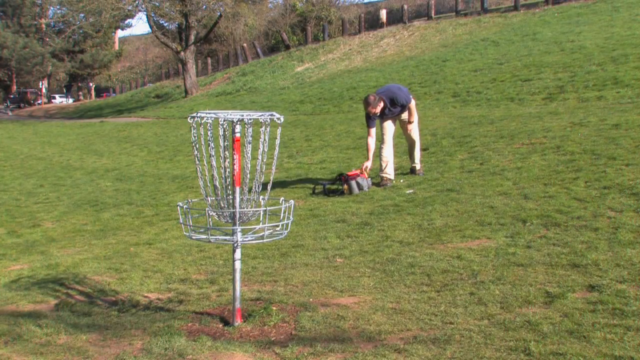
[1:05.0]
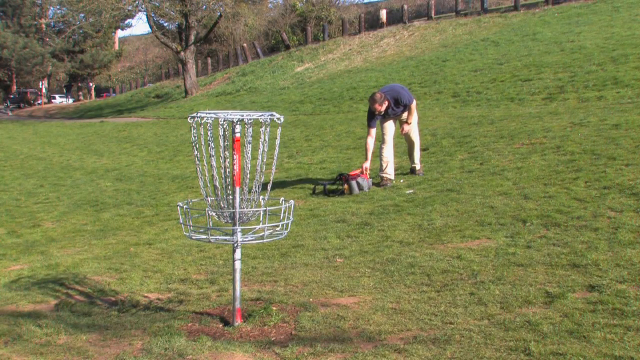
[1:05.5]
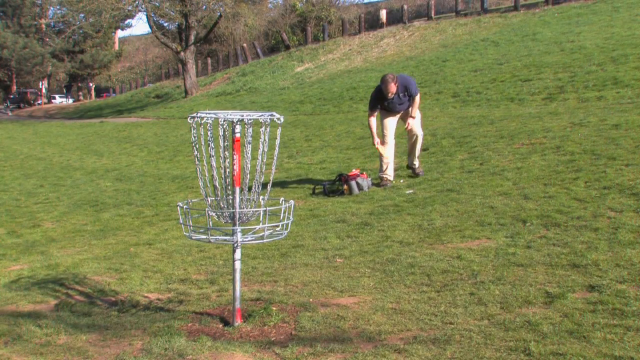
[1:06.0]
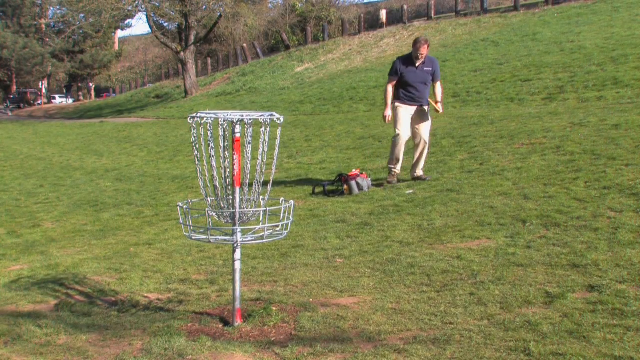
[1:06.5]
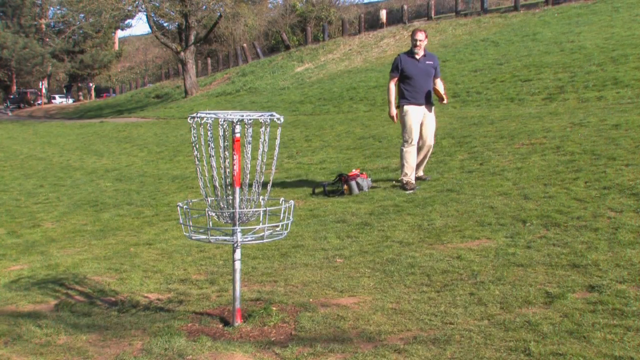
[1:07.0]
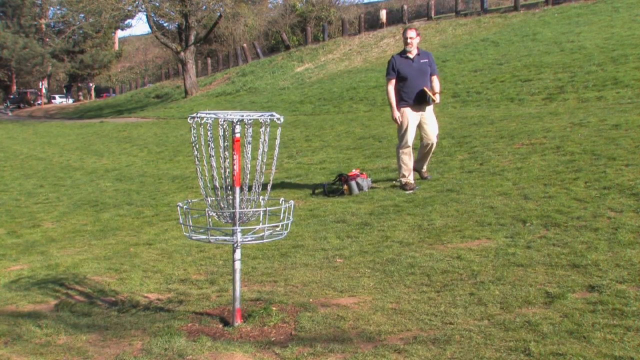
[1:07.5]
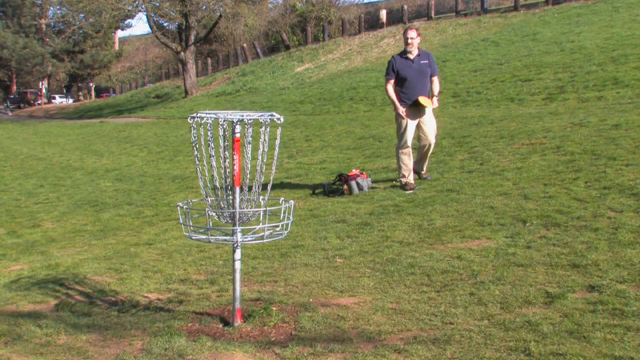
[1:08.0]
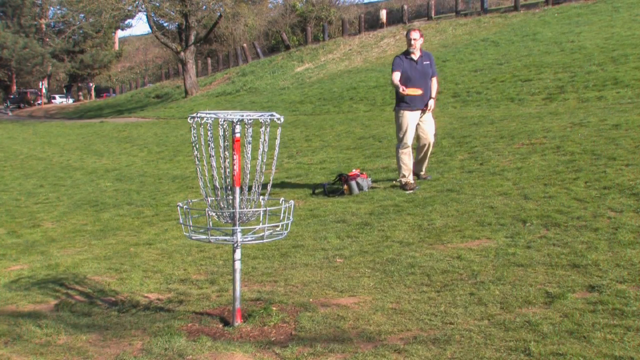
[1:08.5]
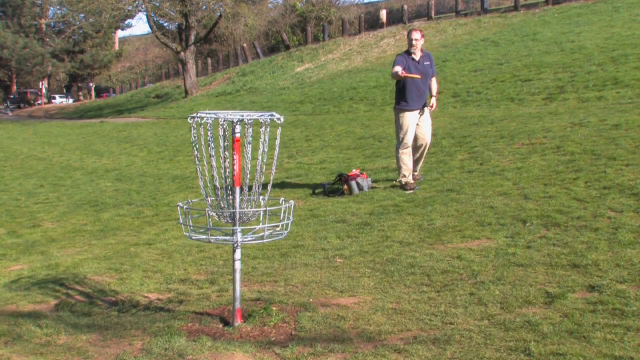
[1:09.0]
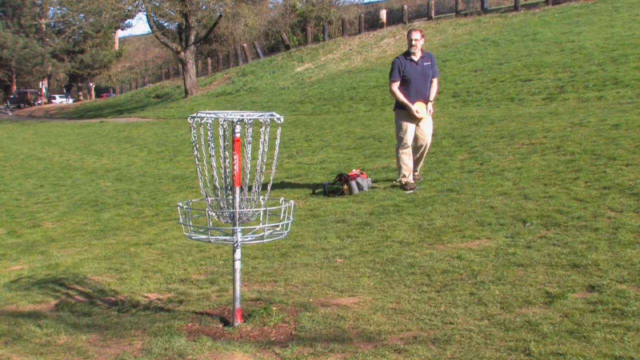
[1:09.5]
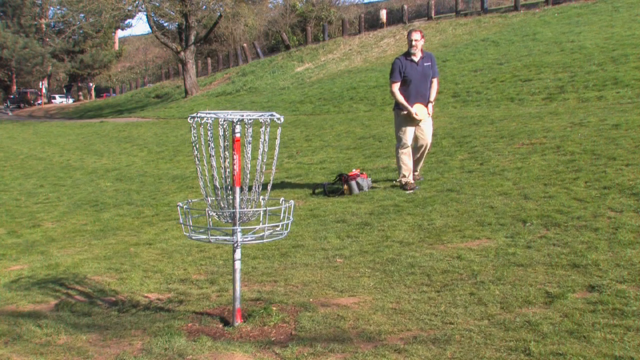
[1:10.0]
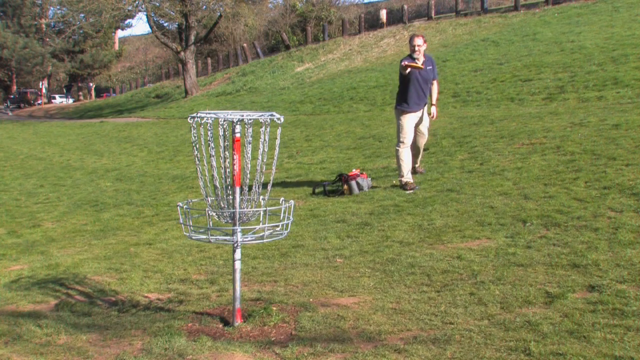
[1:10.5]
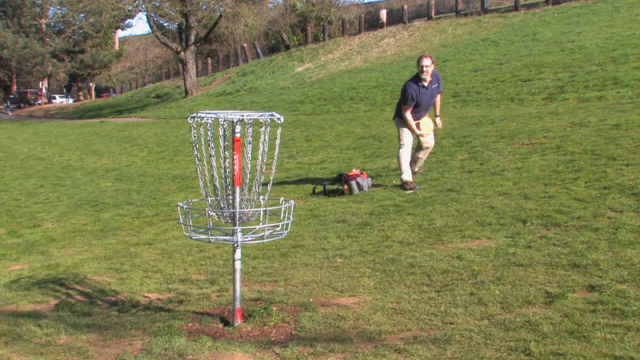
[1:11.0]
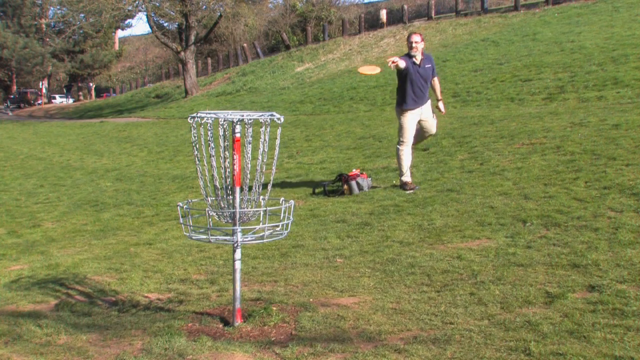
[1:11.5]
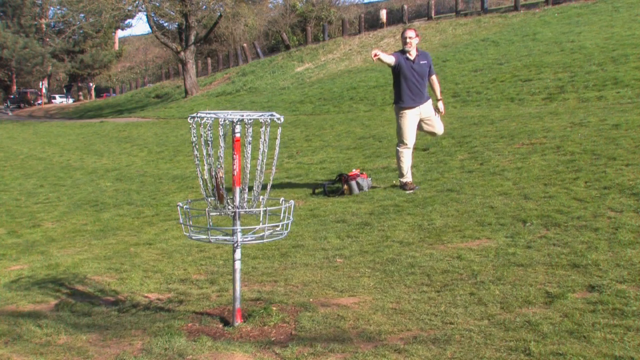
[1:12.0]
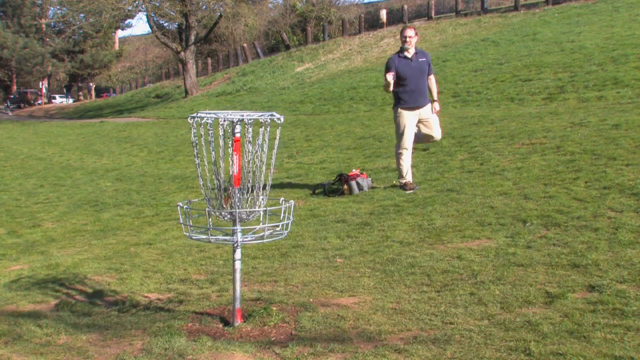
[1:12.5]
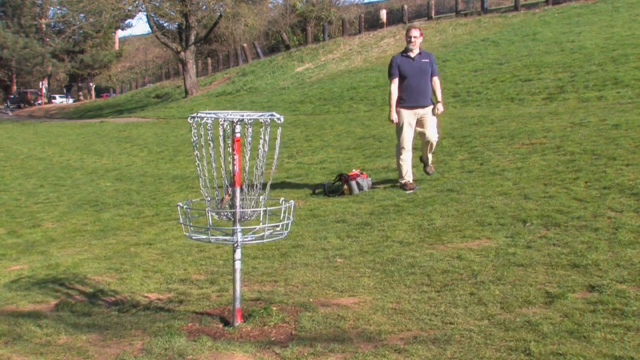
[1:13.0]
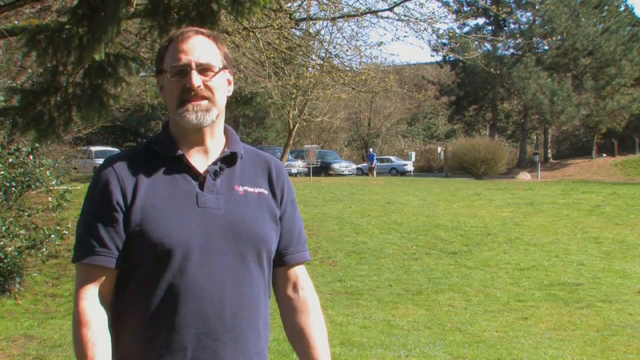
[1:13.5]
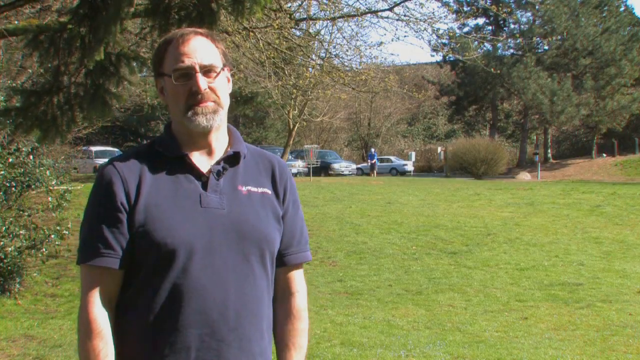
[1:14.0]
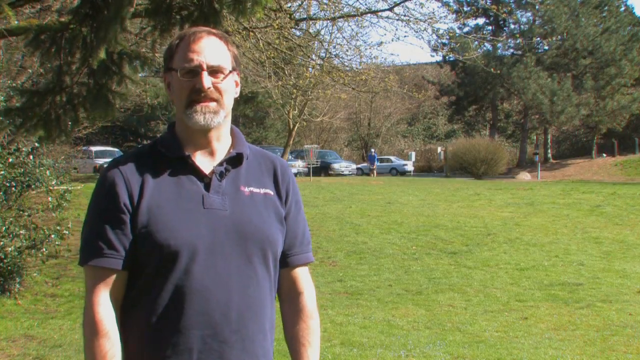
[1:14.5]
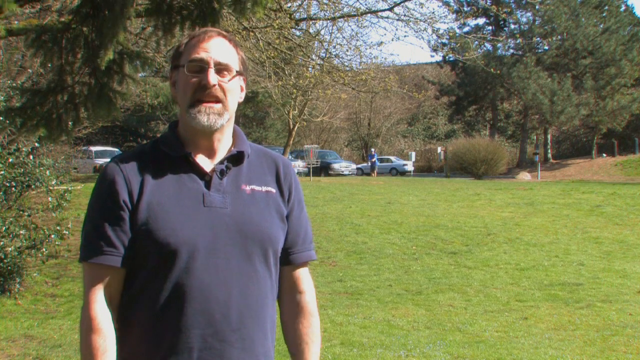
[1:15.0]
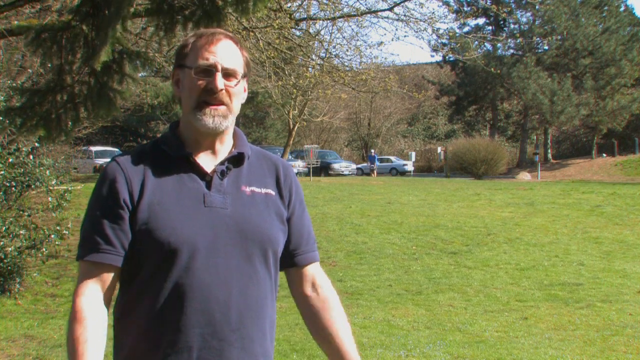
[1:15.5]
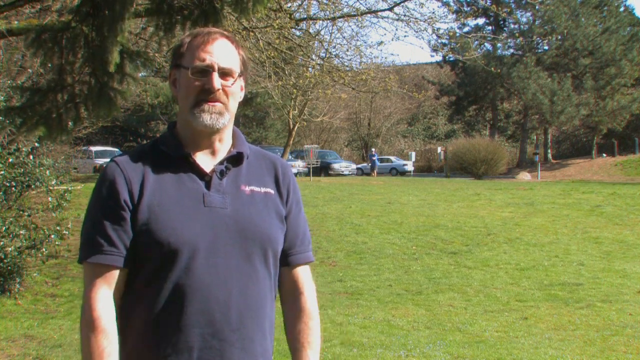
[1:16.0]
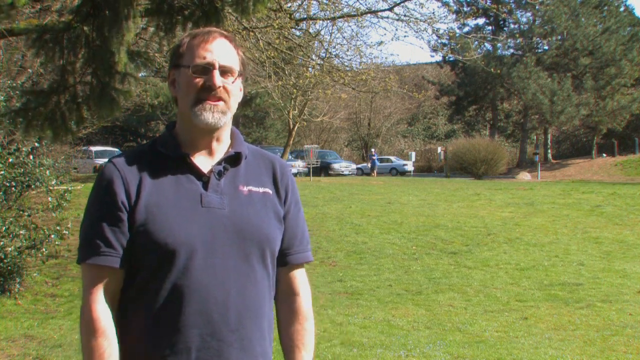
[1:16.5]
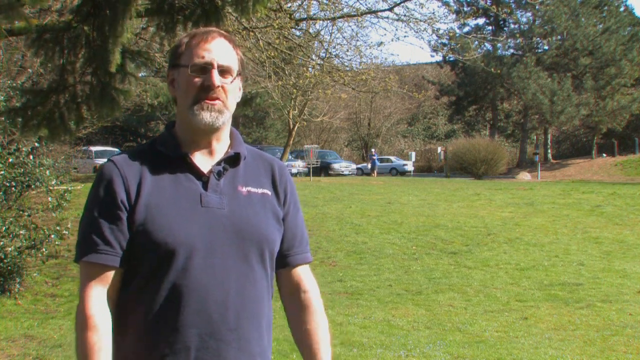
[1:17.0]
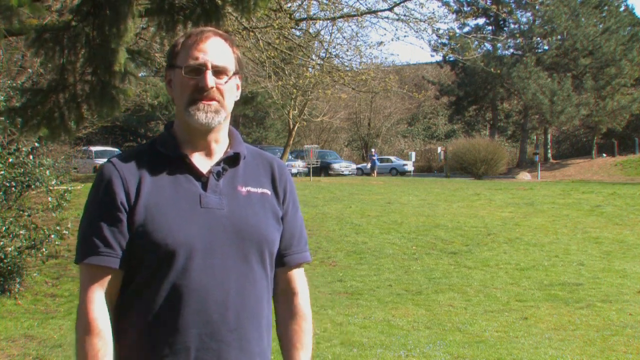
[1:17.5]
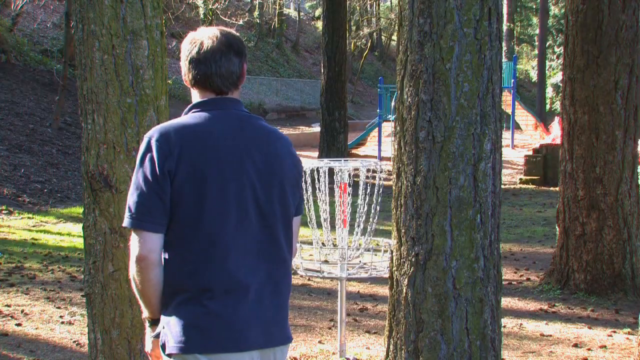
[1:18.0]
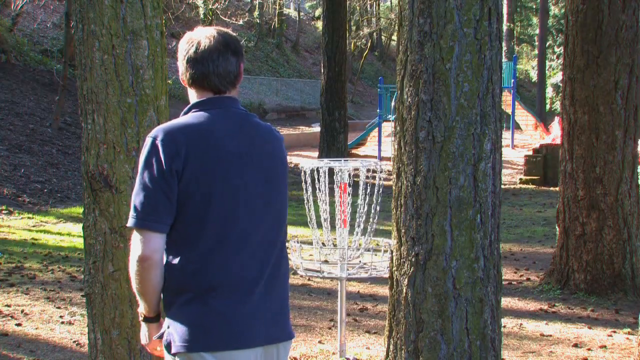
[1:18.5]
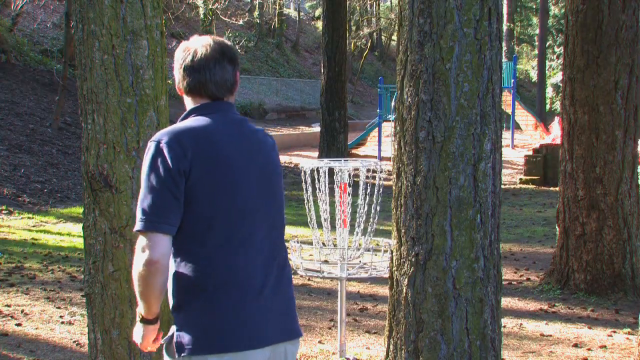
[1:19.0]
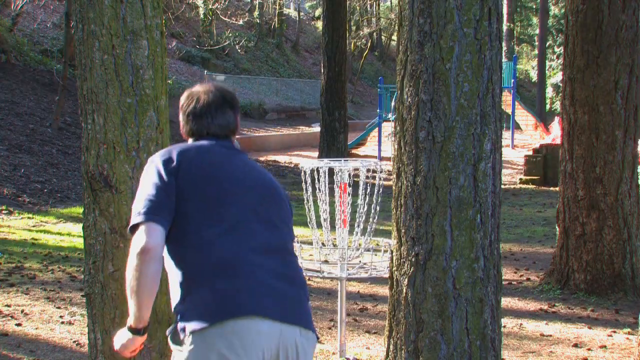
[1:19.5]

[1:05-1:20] He picks another frisbee out of his bag, seemingly yellow, and throws it into the center of the chains. He makes it, and the video goes back to him talking and explaining what he is doing. From a different angle, the frisbee chain game is visible between large trees, with a playground in the background. He throws another frisbee into the game. During the first throw, he appears to make a gesture of excitement at making the goal. When throwing, he steps with his right leg and his left leg goes up while his right hand throws the frisbee. The throw is then shown from a back angle, where a fence is visible in the background. In the frame showing his whole body, he wears khaki pants and brown shoes, and he has a watch on his left hand.